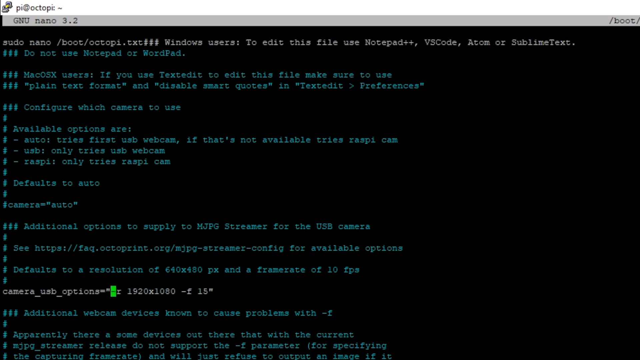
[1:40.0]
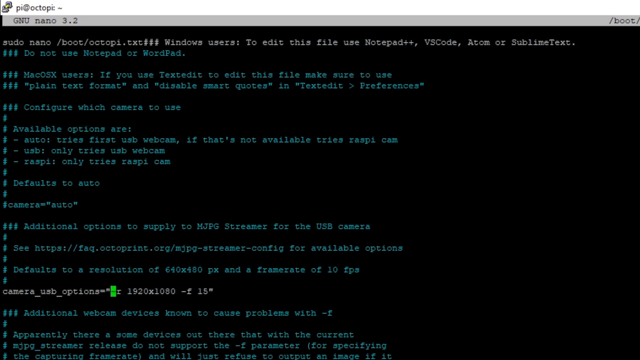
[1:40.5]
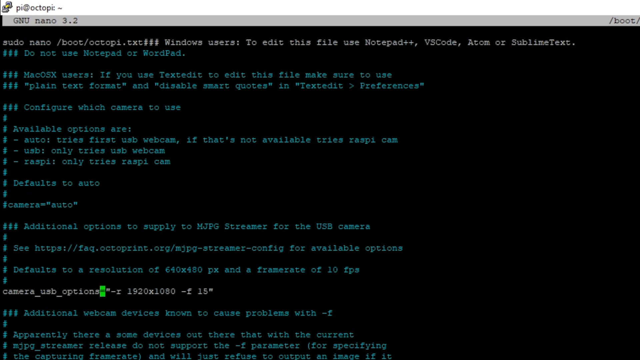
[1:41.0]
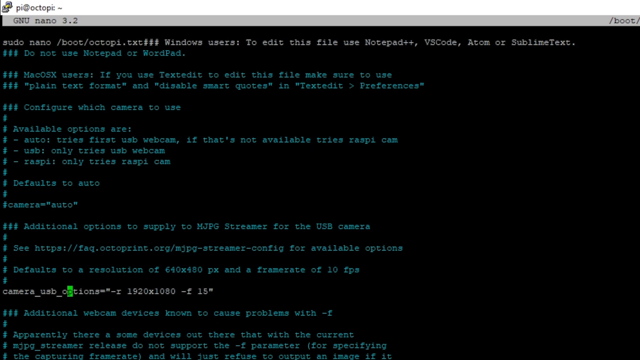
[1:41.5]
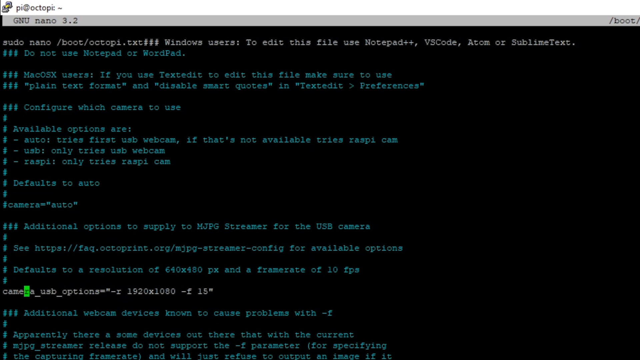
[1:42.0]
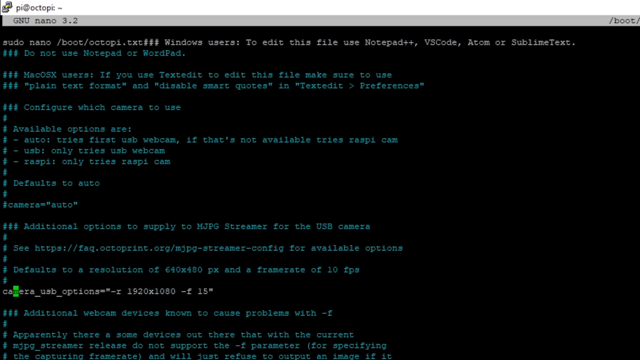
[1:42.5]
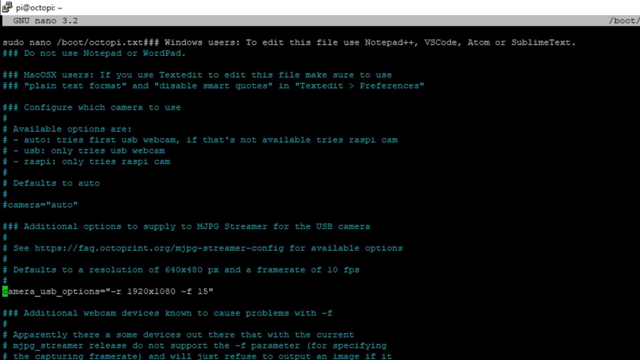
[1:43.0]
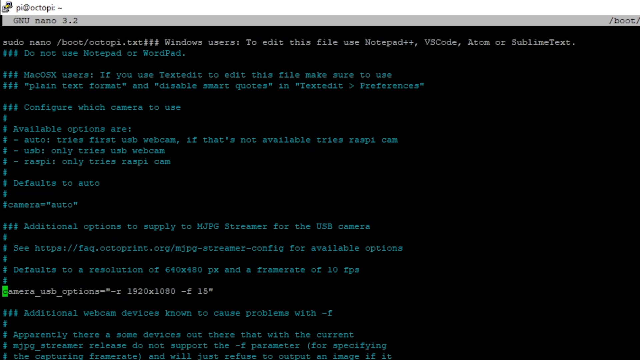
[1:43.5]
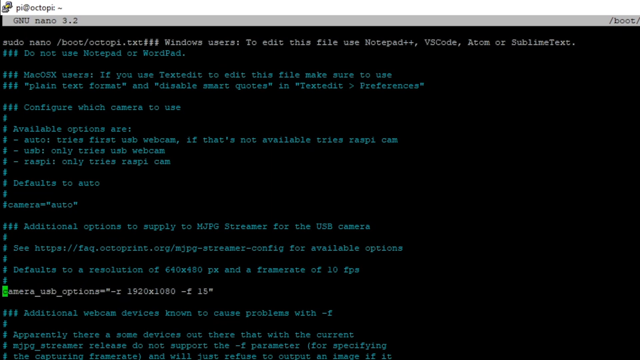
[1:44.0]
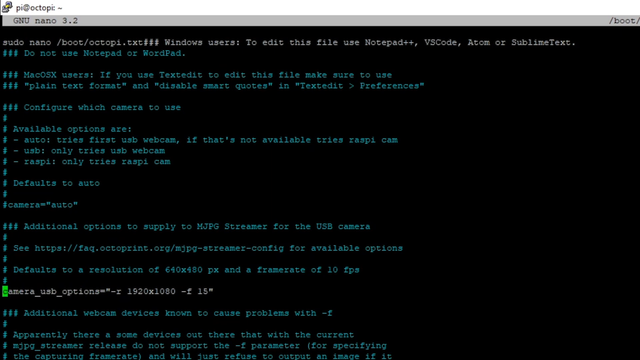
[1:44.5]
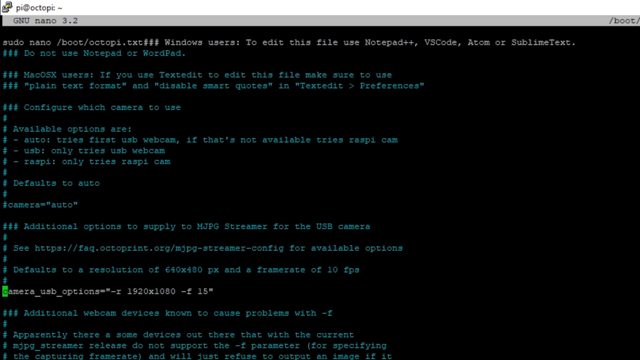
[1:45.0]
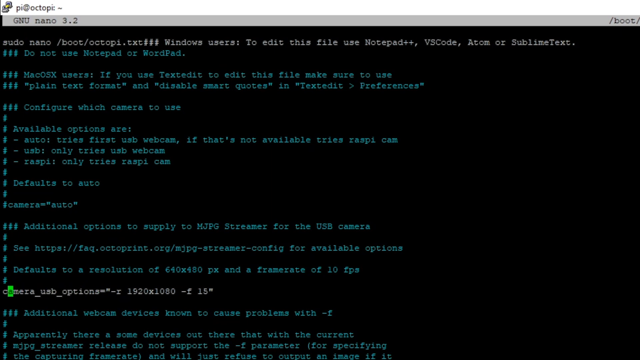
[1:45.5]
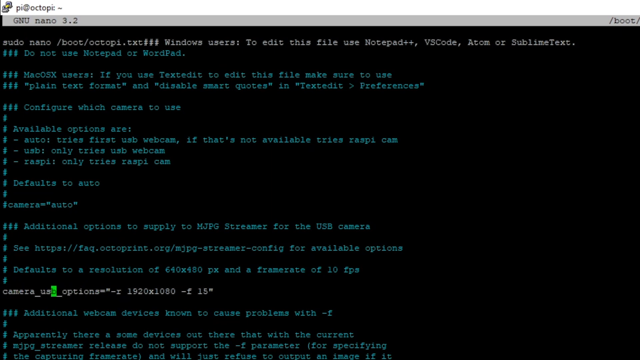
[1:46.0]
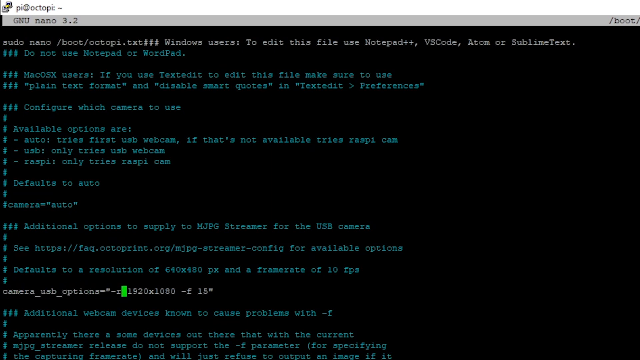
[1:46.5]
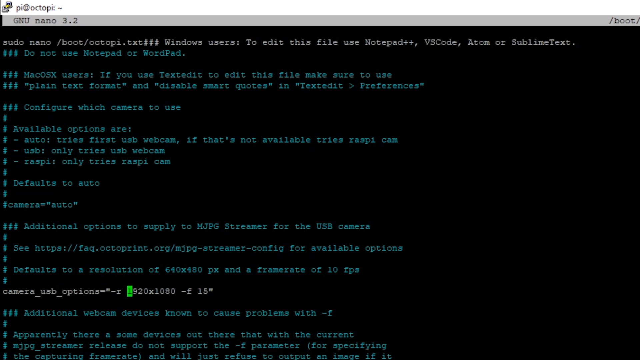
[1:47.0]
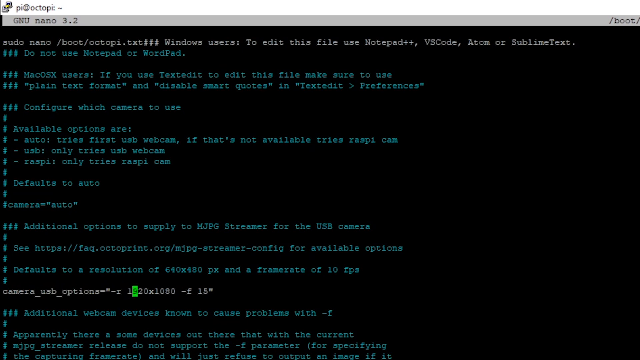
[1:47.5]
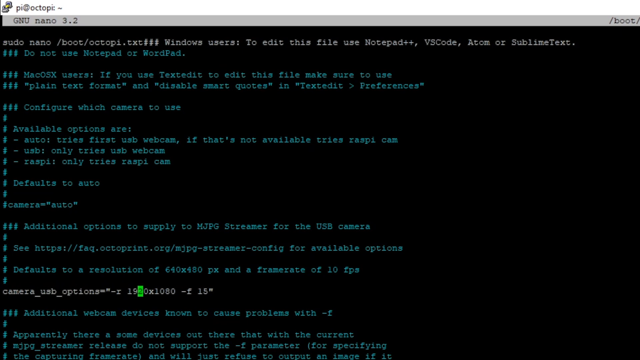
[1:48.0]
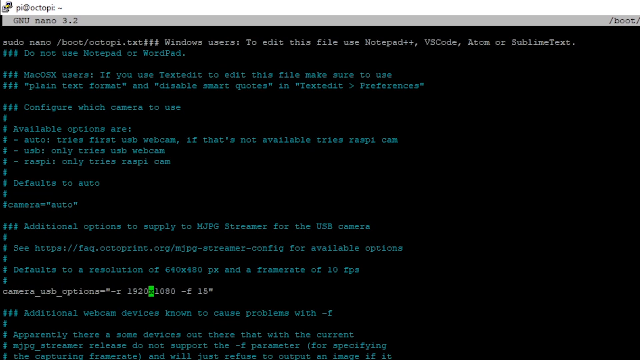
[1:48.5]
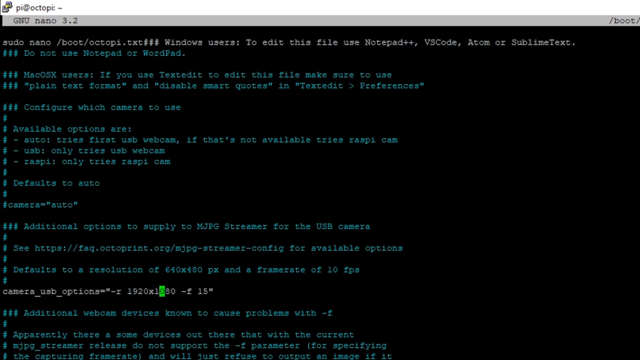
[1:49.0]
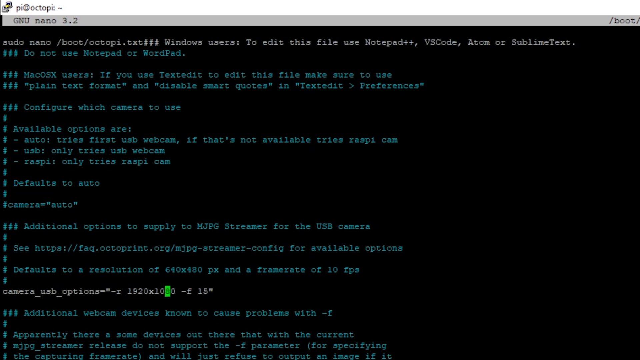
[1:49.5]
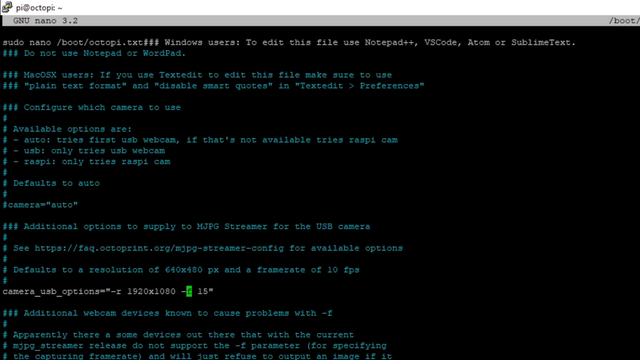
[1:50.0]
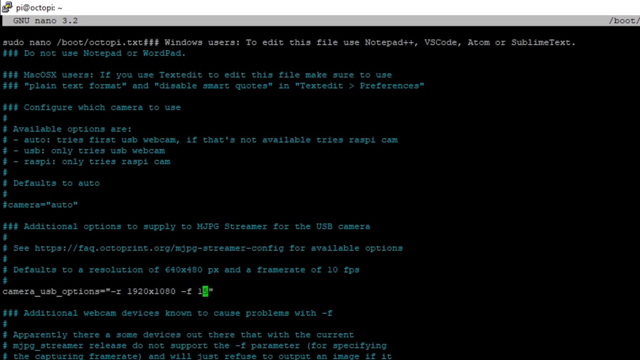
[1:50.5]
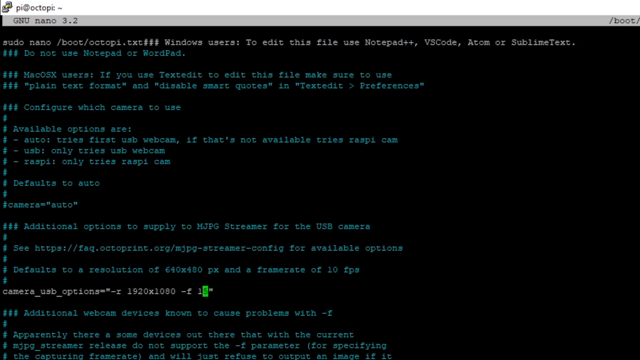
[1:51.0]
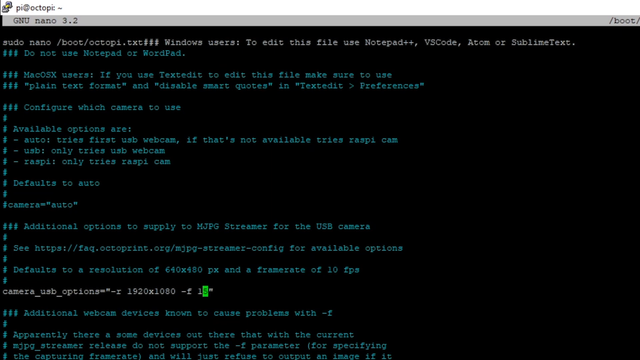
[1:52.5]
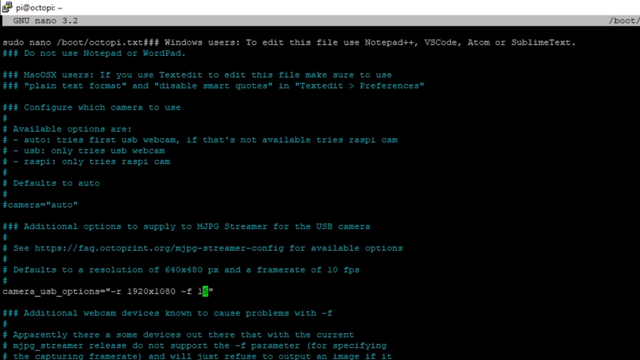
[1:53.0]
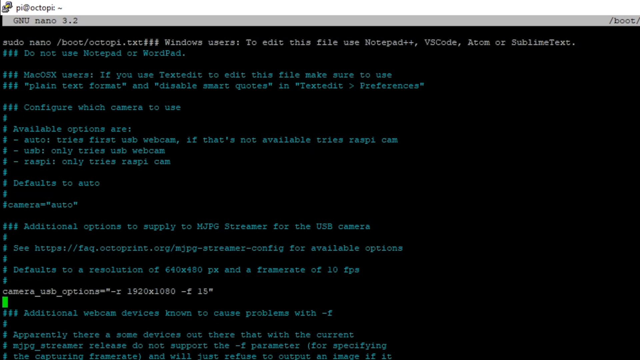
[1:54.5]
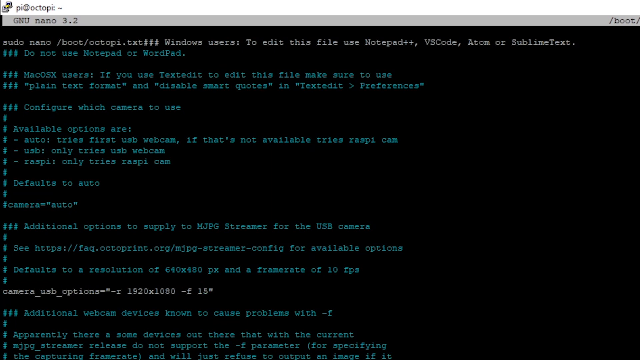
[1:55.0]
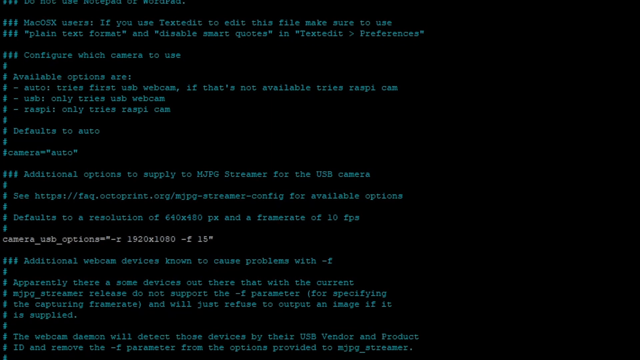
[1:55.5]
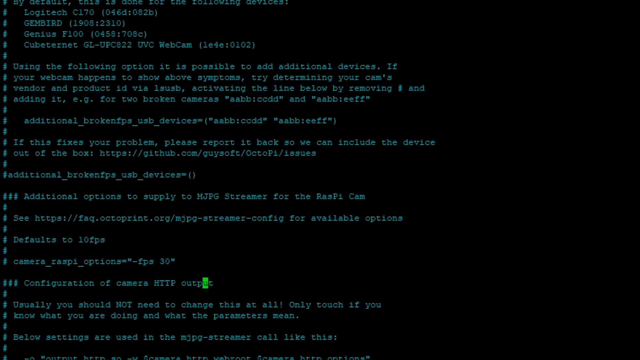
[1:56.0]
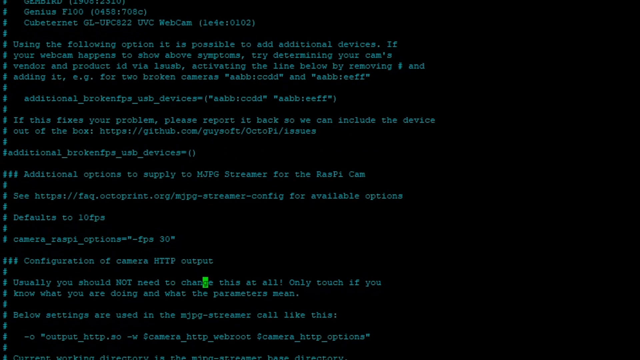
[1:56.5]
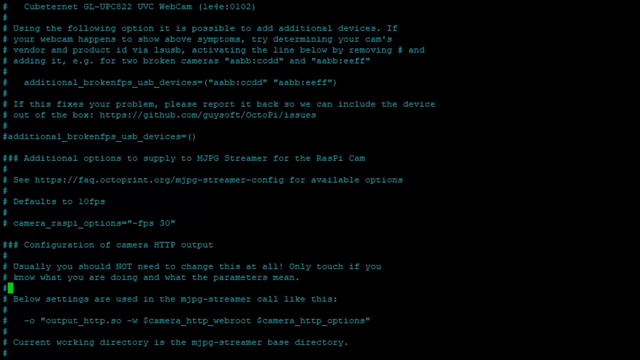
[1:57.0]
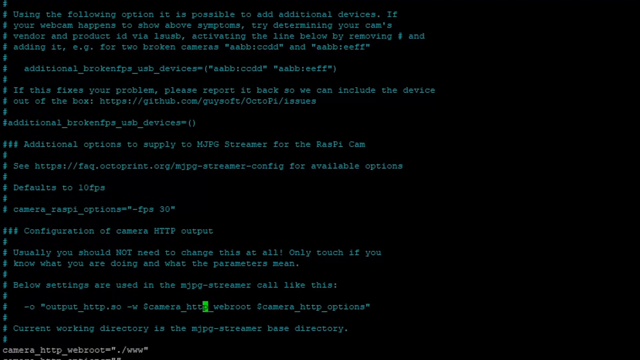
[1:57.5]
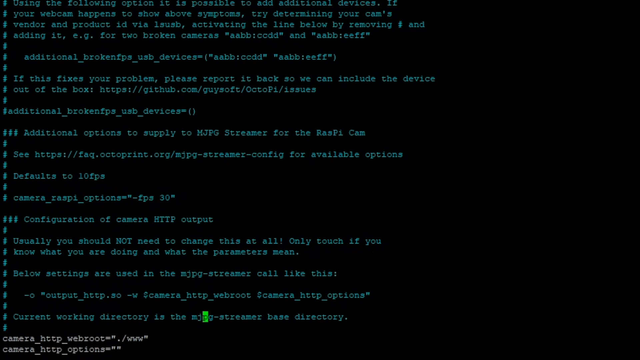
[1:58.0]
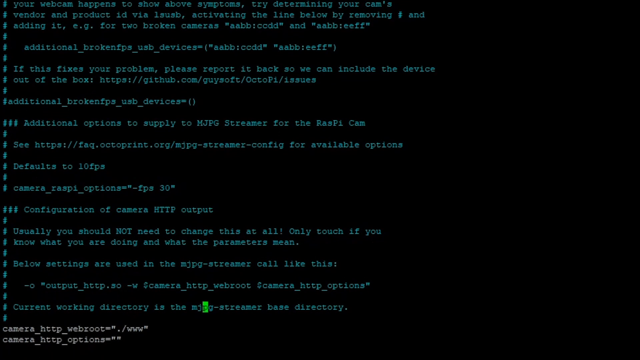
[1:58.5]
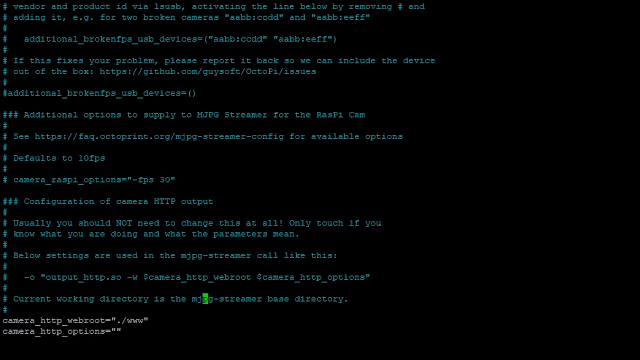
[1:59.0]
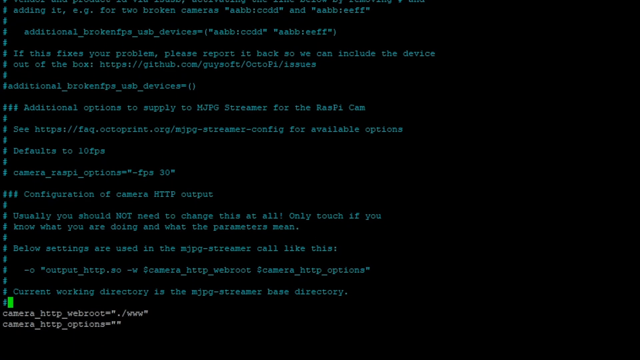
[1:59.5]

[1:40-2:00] The man, apparently demonstrating how to save camera settings, is on a coding page with light green-teal code on a black screen. His cursor is a green rectangle over the words, and it rests on the only spot that seems to have some white letters of code, reading "camera_usb_options". He then scrolls down into the blue code, where "camera_http_webroot ./www" and "camera http options" are visible.